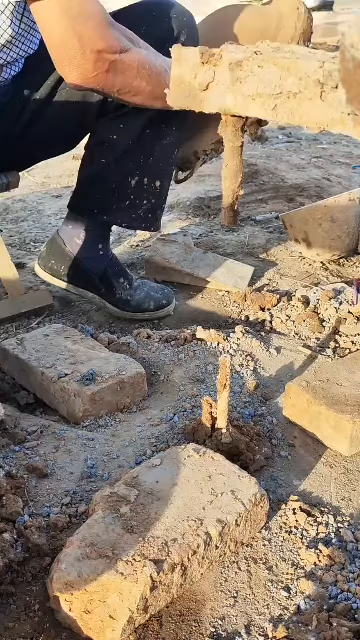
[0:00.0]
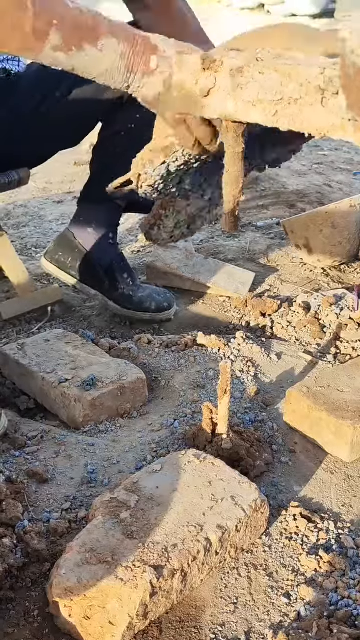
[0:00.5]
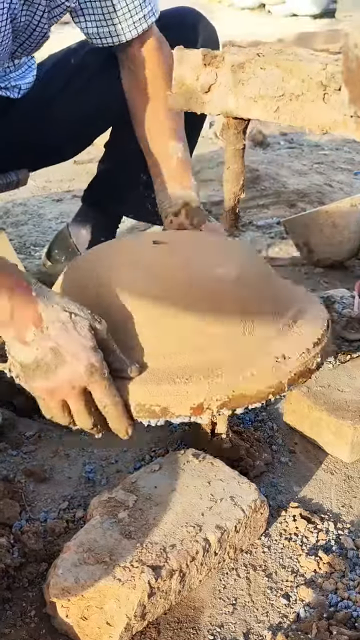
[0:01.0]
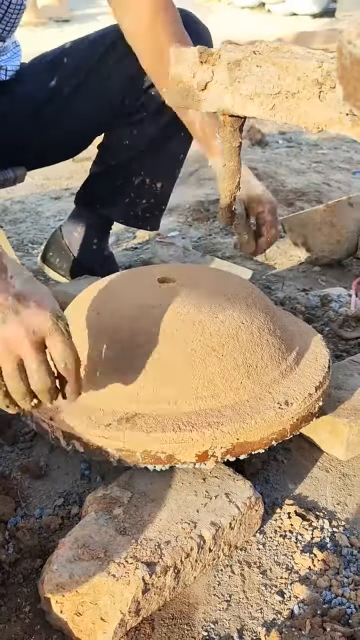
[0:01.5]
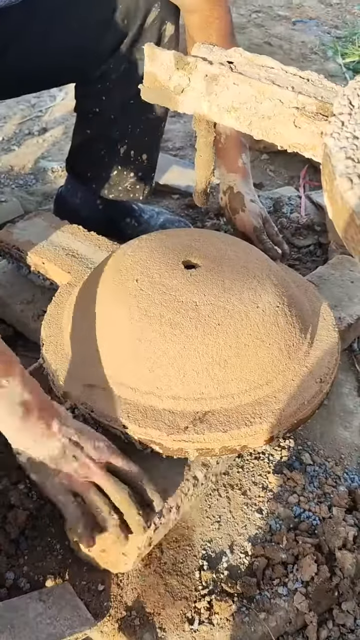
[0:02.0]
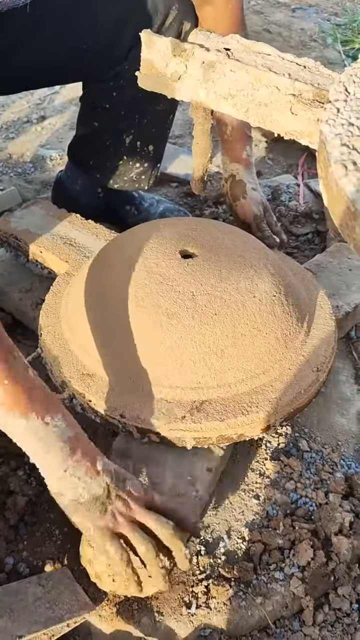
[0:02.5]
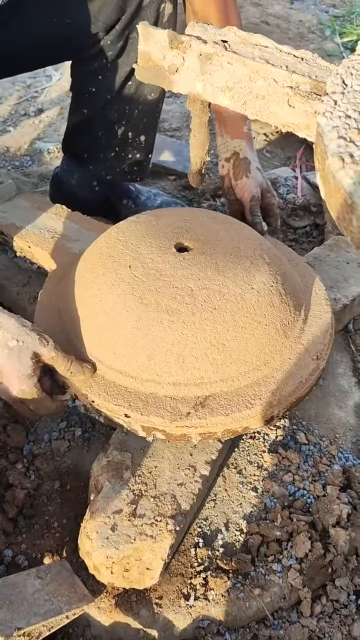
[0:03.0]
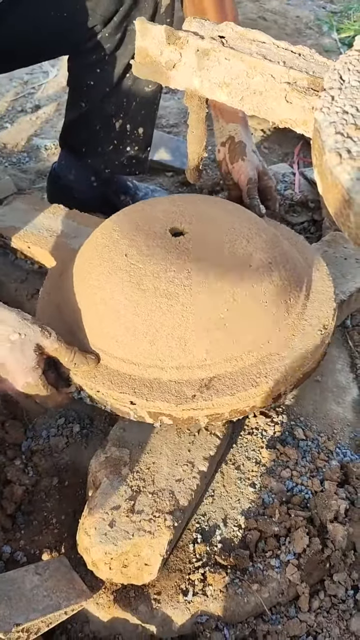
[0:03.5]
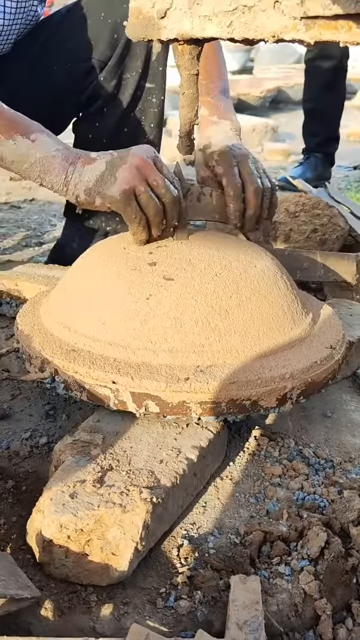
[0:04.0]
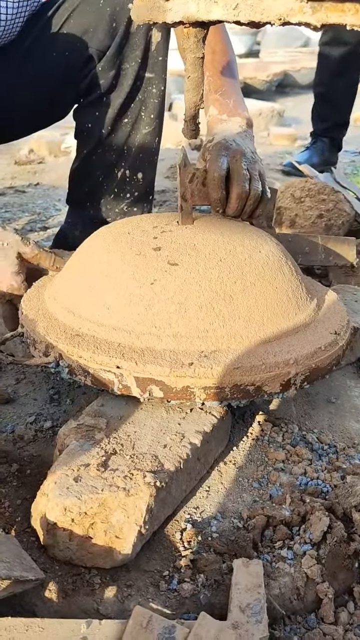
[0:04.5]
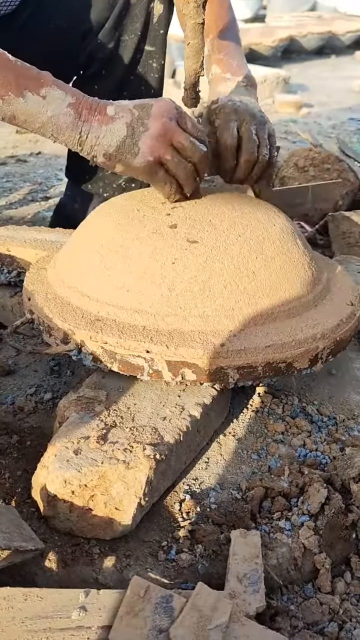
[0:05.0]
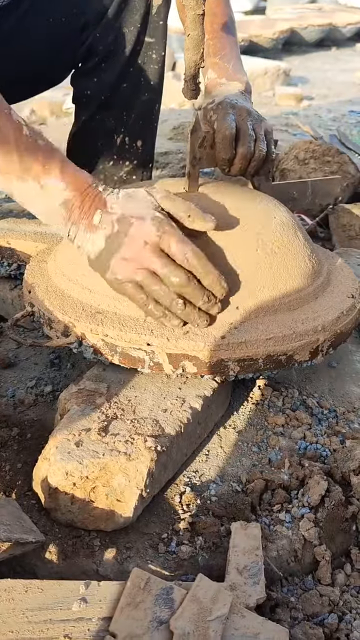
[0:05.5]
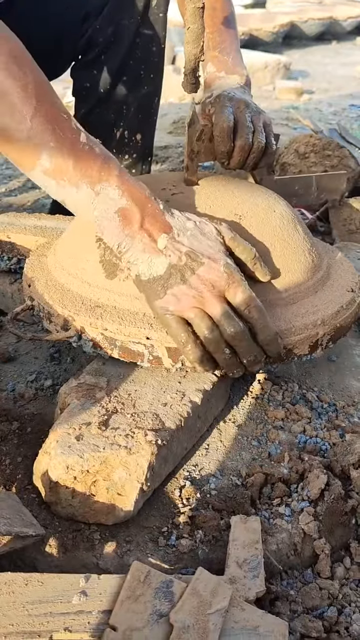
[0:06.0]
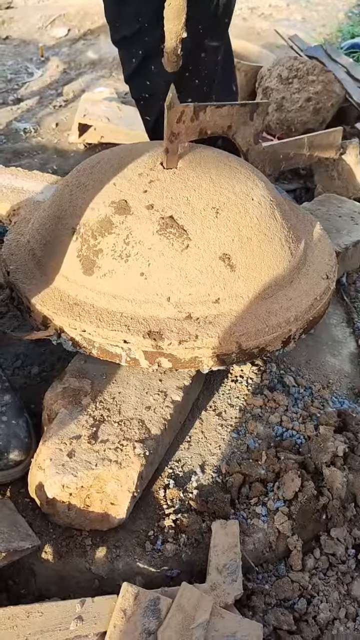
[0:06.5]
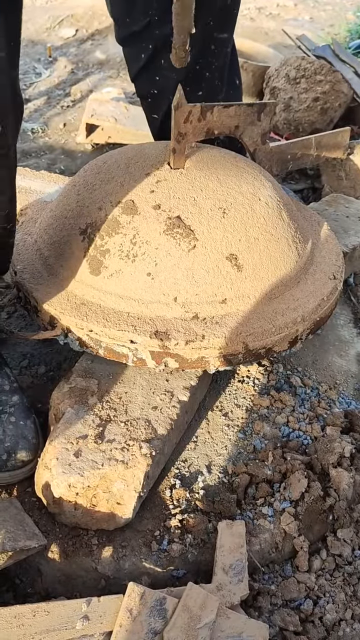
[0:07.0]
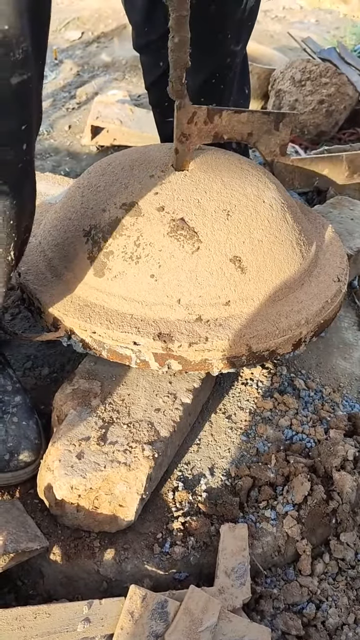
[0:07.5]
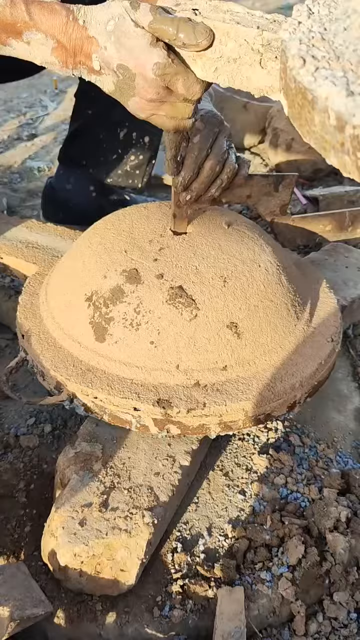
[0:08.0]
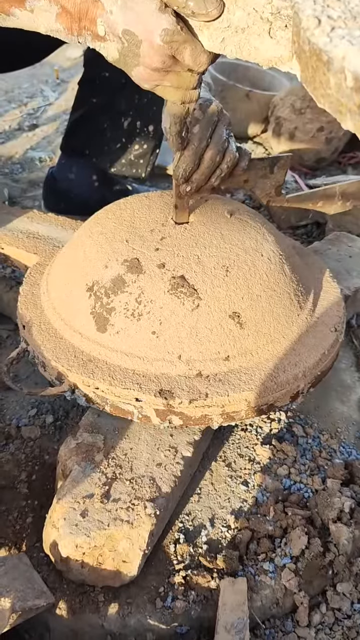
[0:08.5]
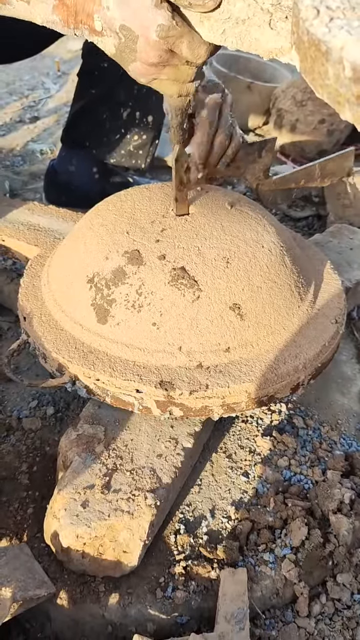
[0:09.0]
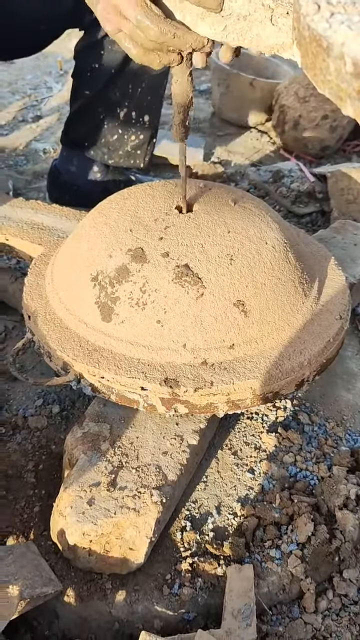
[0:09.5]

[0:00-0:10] Someone is crouched down in front of a sandy area that looks somewhat like a workspace. They put an apparatus shaped roughly like a call bell or restaurant bell, which appears to be made of clay, on top of some rocks. It has a hole in the top with a spike coming out of it. The person then uses a tool to align it to what looks like a protractor on top, which spins around.